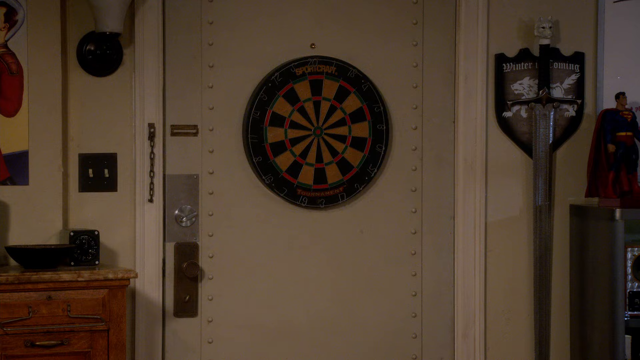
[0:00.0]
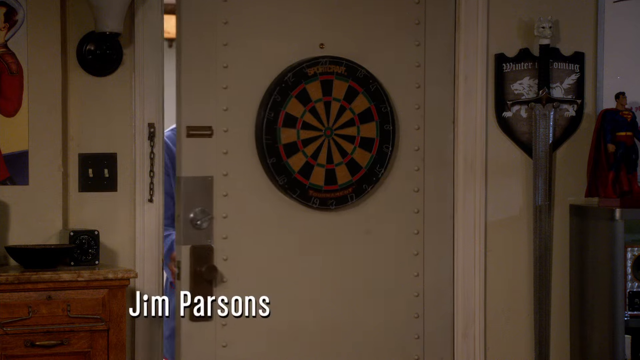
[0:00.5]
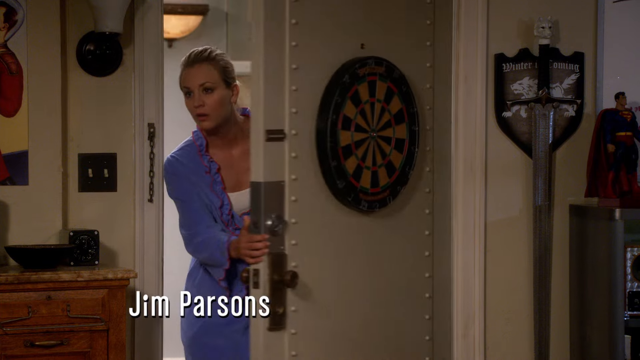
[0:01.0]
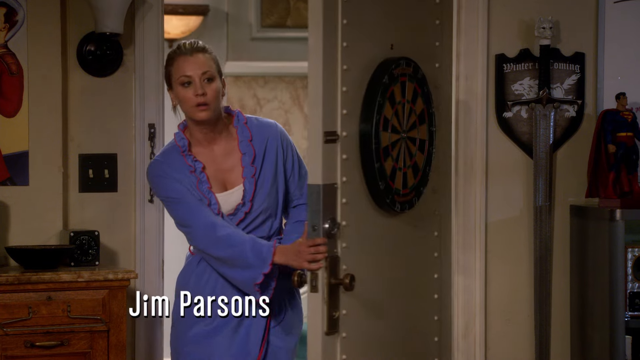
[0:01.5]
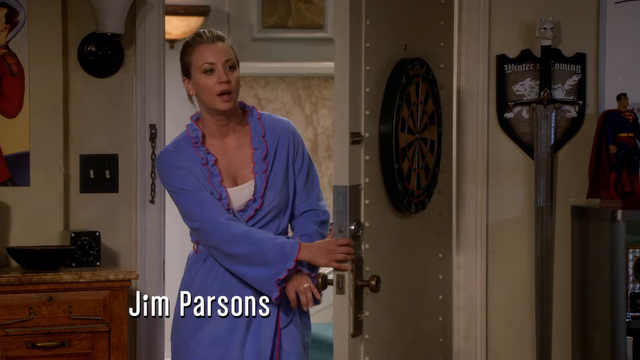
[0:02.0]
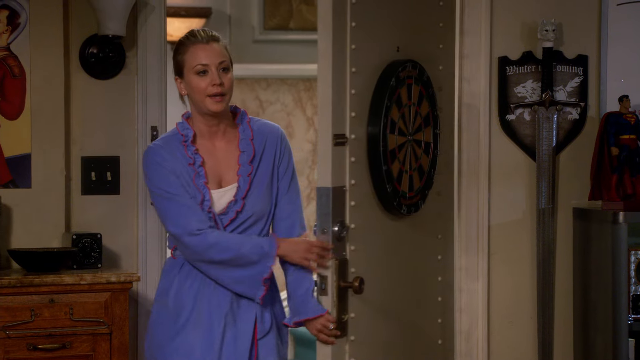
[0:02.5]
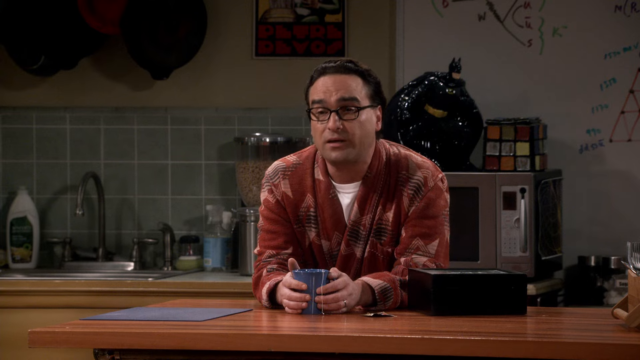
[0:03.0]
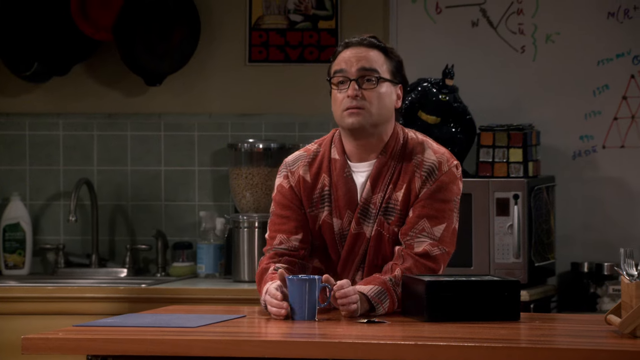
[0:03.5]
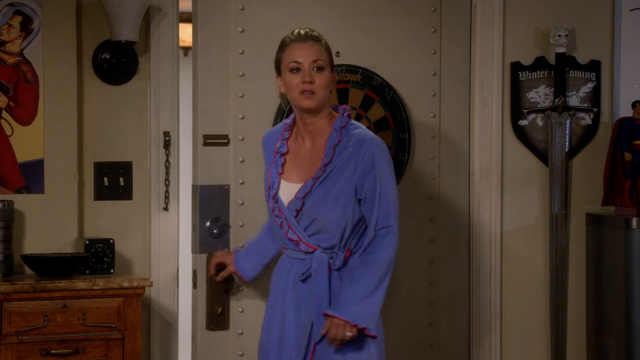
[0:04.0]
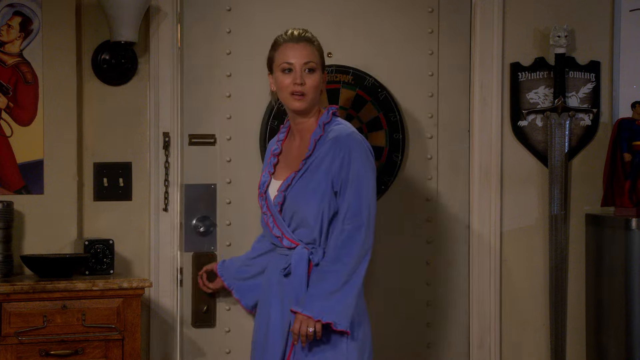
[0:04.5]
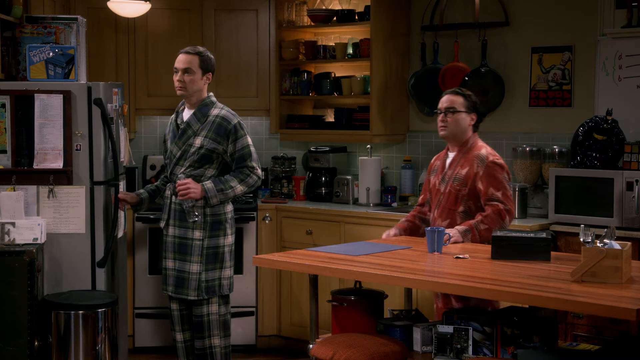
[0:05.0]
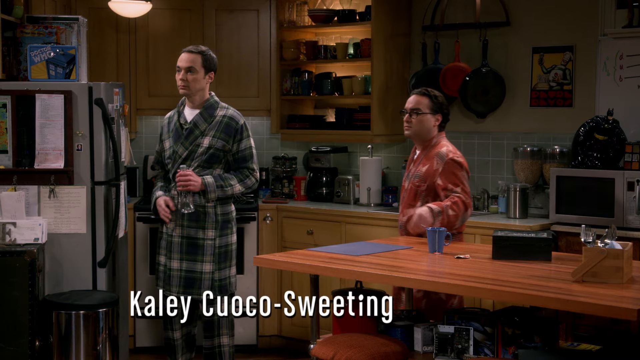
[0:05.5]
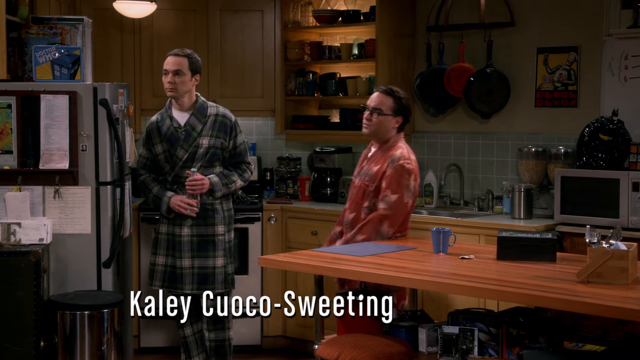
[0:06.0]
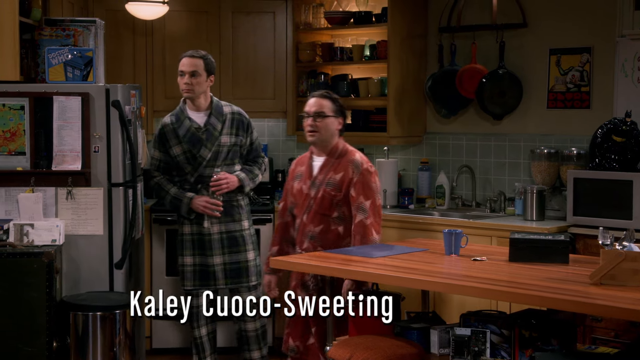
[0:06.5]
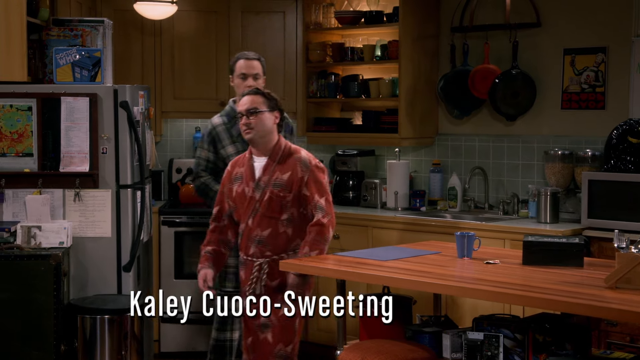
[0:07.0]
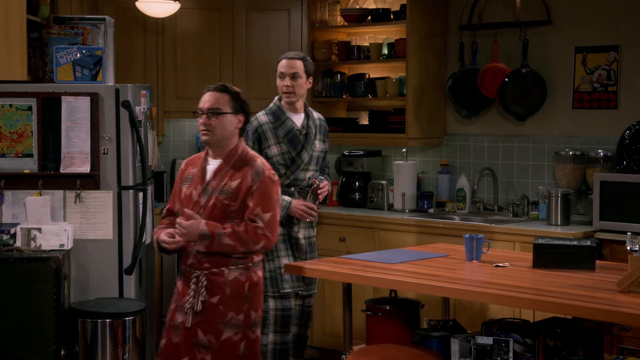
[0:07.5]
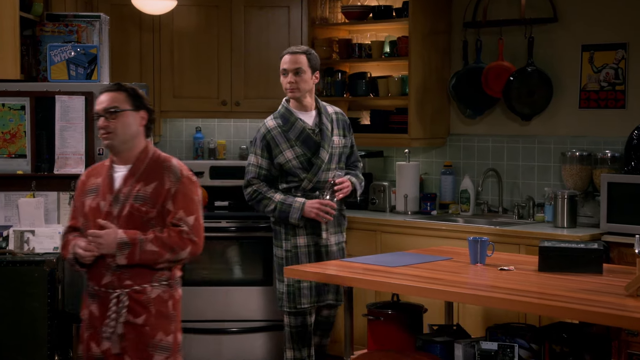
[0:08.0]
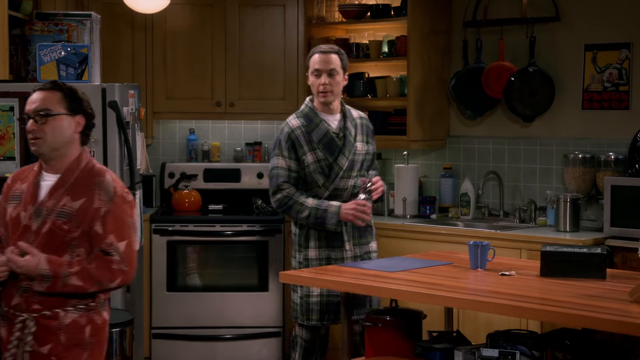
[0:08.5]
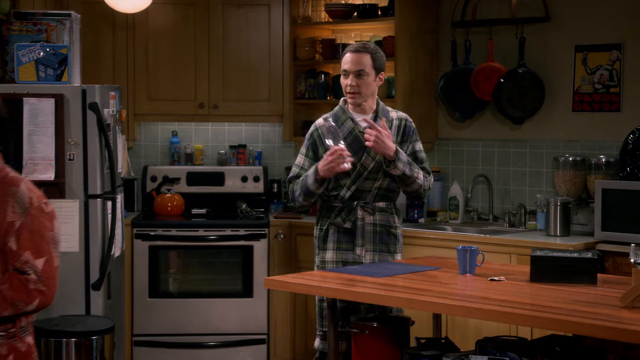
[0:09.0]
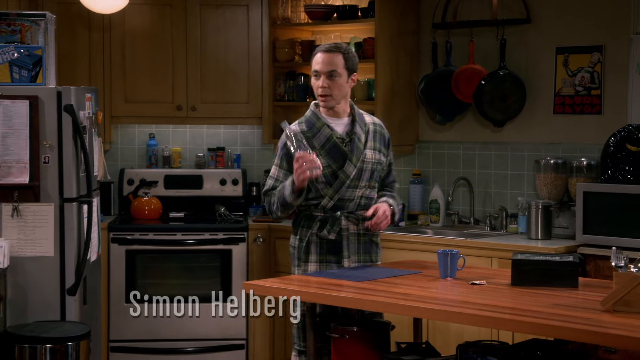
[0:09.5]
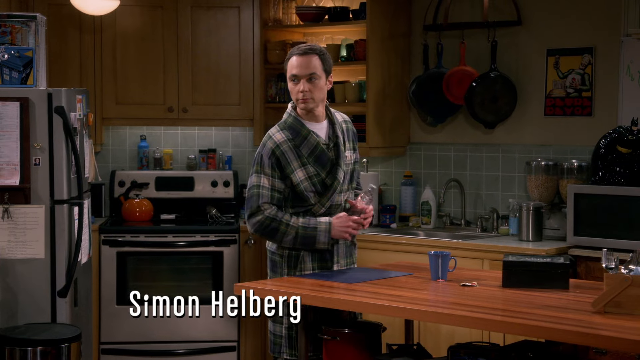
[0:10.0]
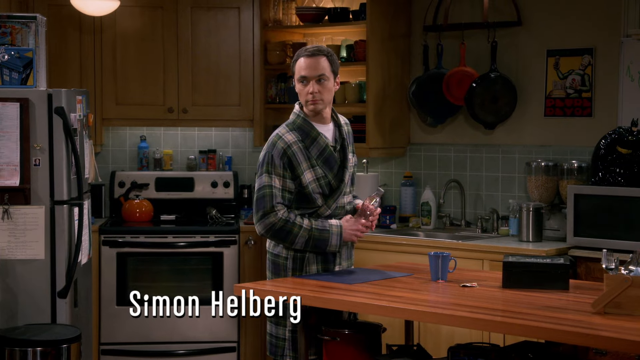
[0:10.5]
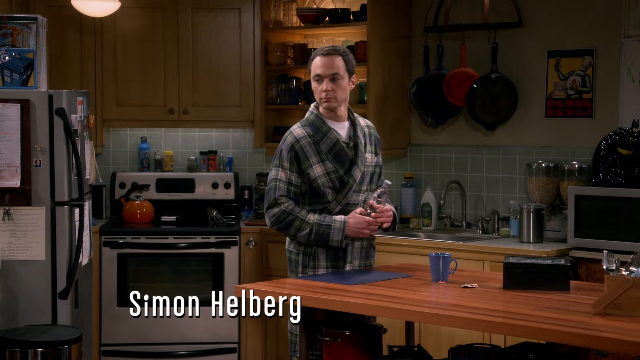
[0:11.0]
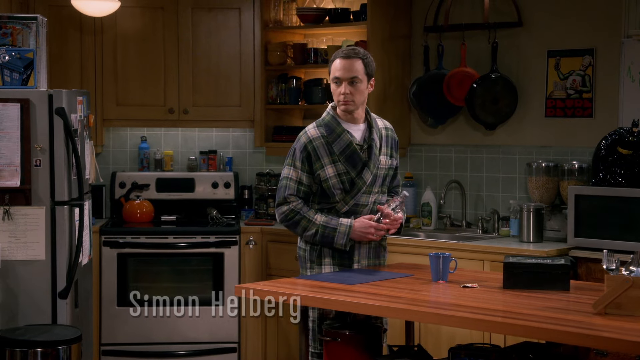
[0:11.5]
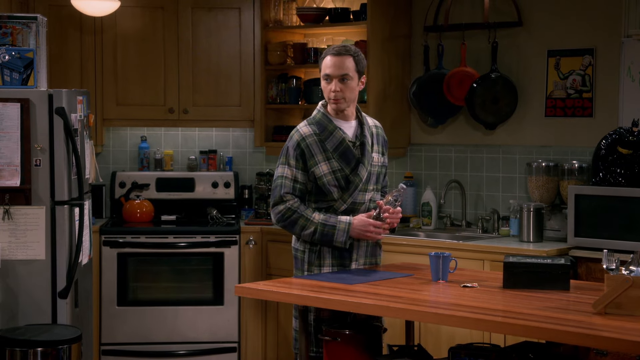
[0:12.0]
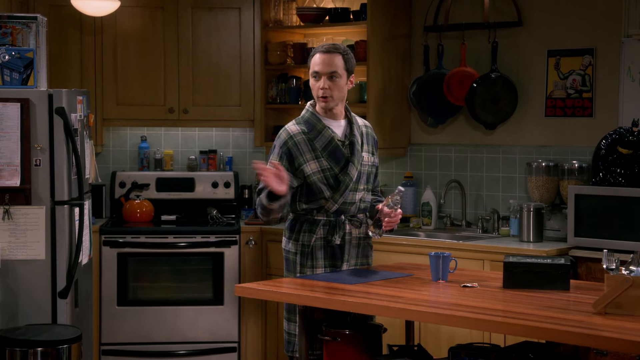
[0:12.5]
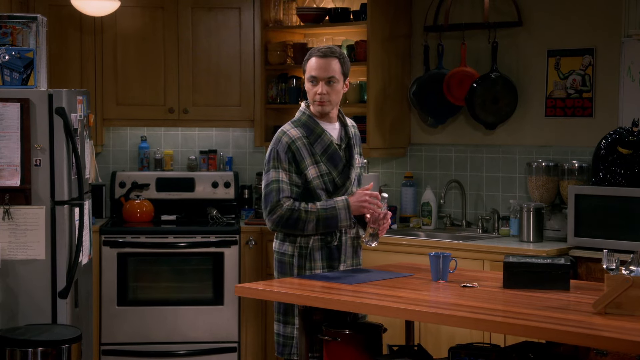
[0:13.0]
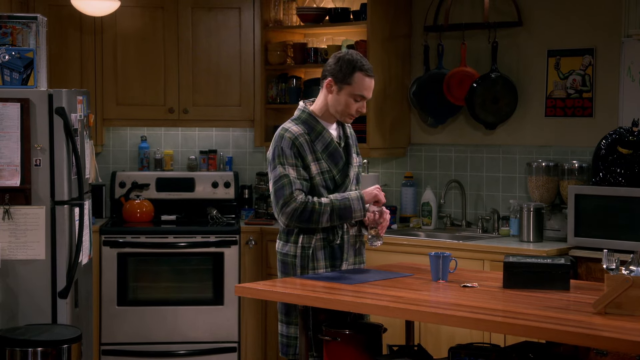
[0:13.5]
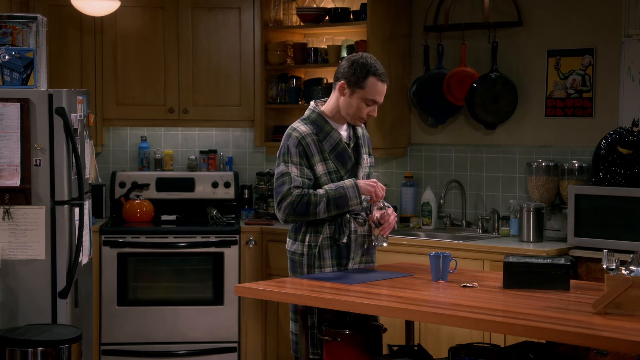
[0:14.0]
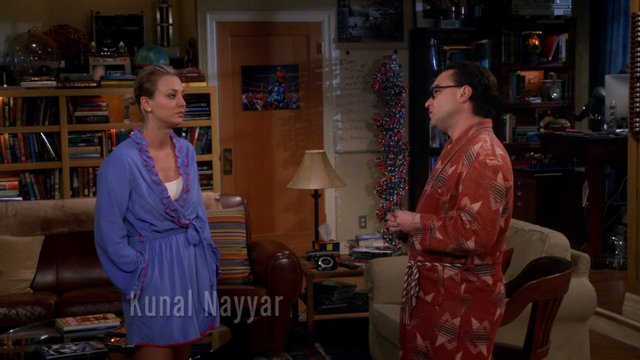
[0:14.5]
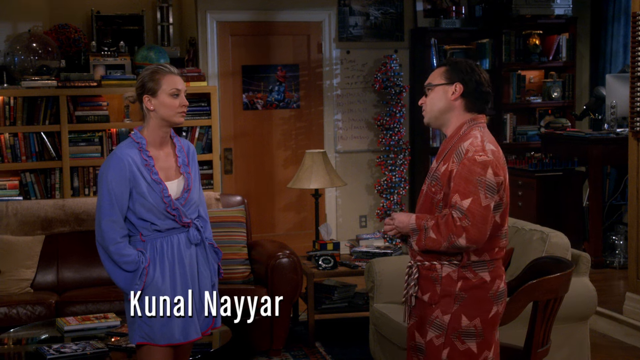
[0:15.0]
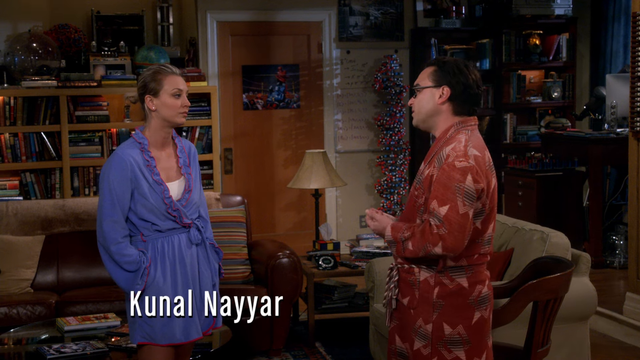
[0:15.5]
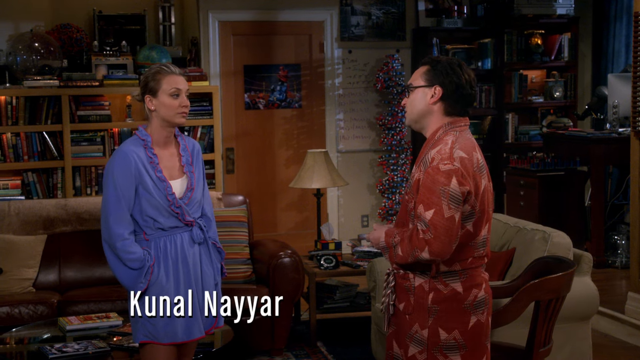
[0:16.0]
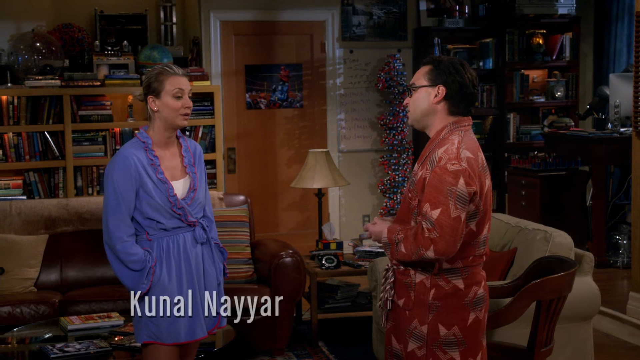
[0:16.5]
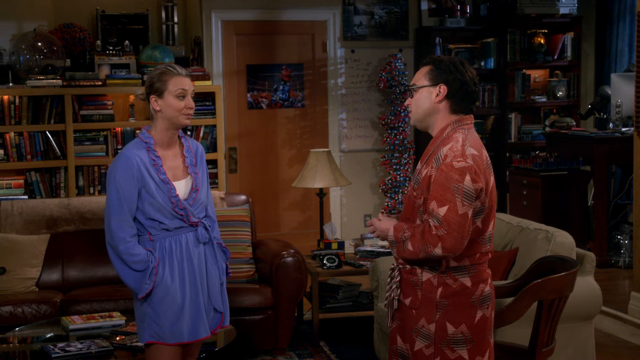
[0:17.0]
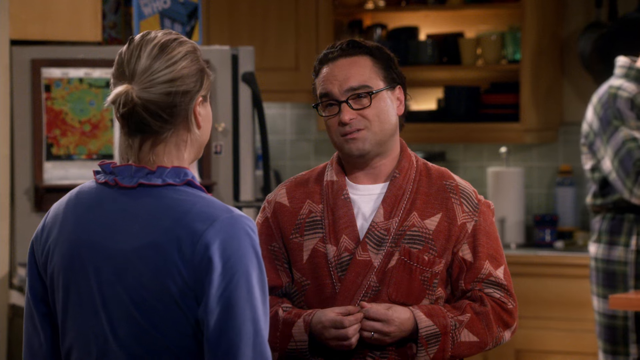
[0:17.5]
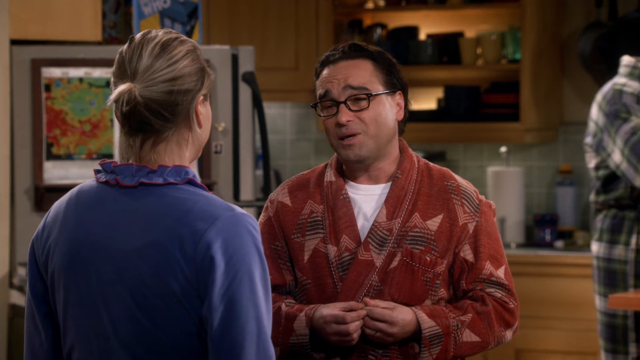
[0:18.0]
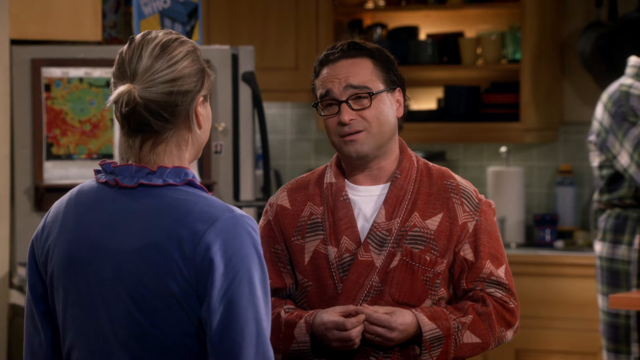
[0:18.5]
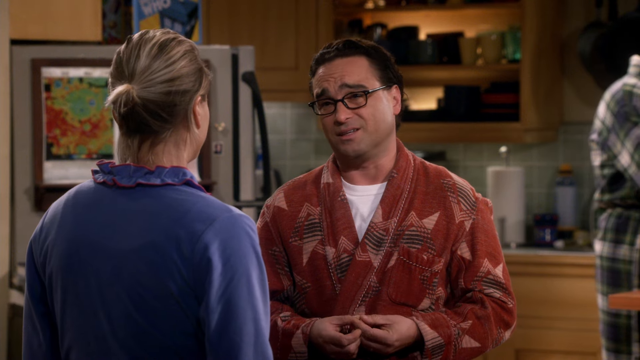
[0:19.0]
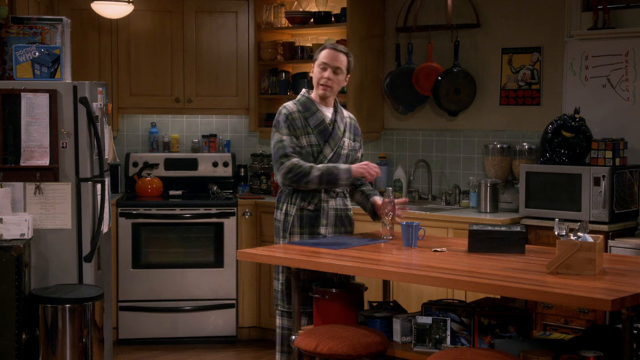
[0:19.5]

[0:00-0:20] The video appears to be an episode of 3rd Rock from the Sun. A woman enters a home, opening the door and peeking around the corner of it; a dart board is on the back of the door as she comes in. A man in a tan robe is leaning over the counter, and another man, standing over near the stove, has on a plaid robe. It appears to be morning or possibly nighttime; it is unclear which. Both men are wearing their pajamas. The woman who enters appears to be a guest. The back of the door has four locks: a chain lock, a sliding lock, a lock on the door handle and a lock above the door handle.